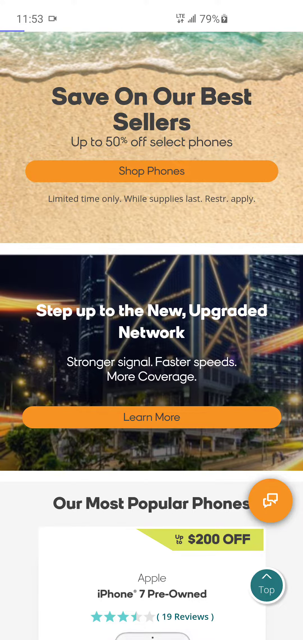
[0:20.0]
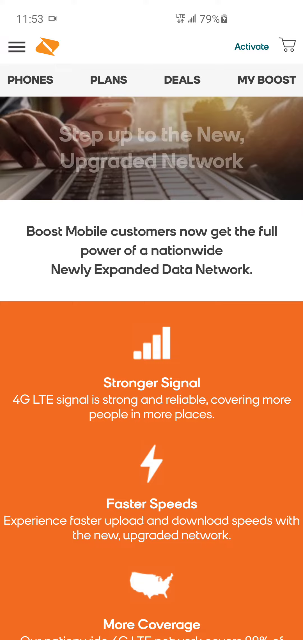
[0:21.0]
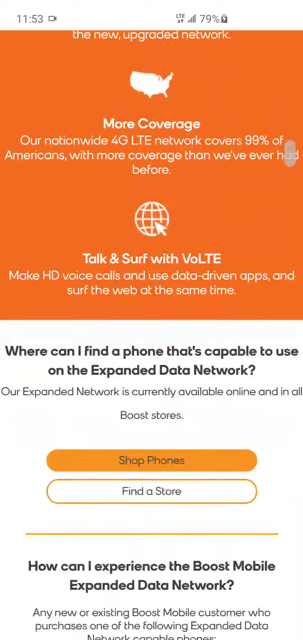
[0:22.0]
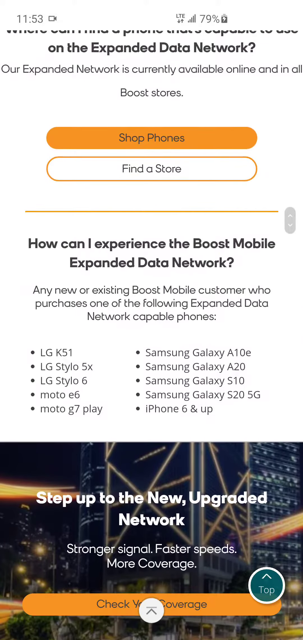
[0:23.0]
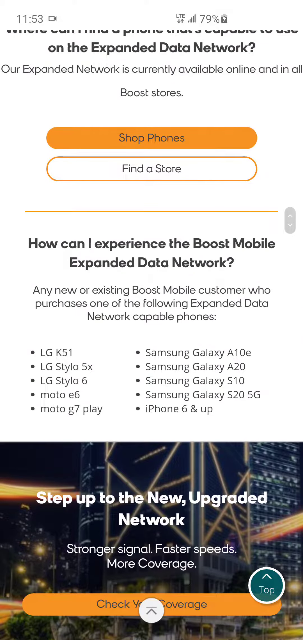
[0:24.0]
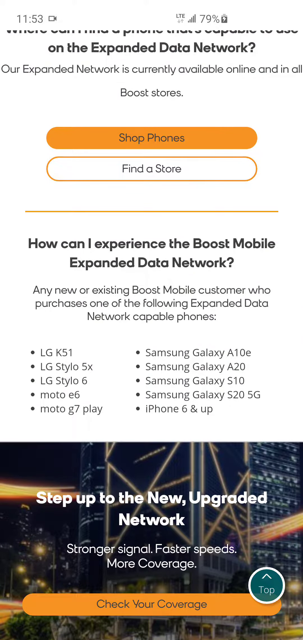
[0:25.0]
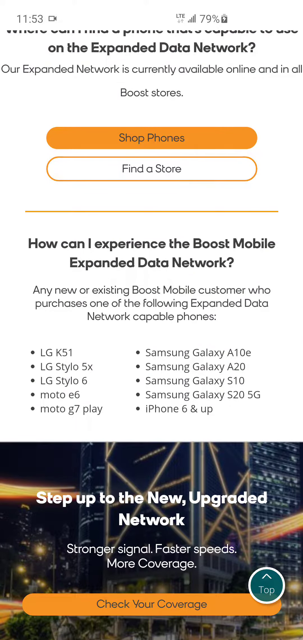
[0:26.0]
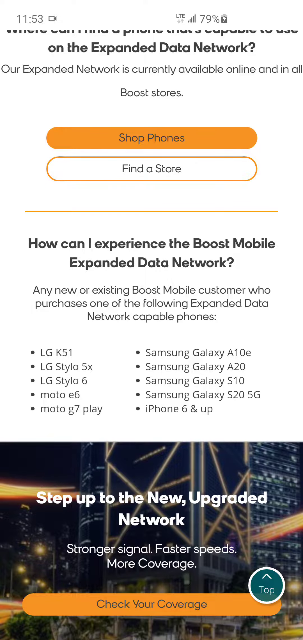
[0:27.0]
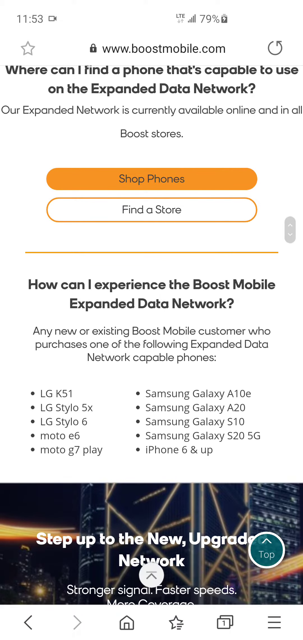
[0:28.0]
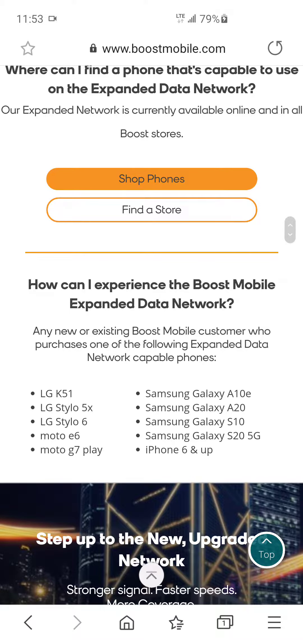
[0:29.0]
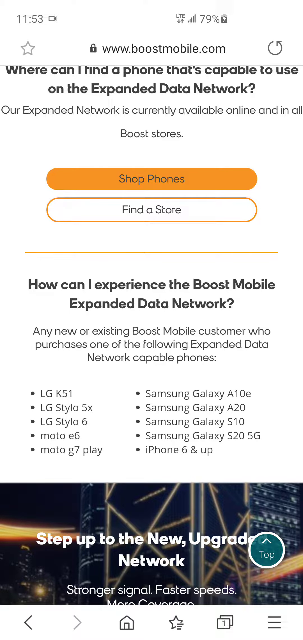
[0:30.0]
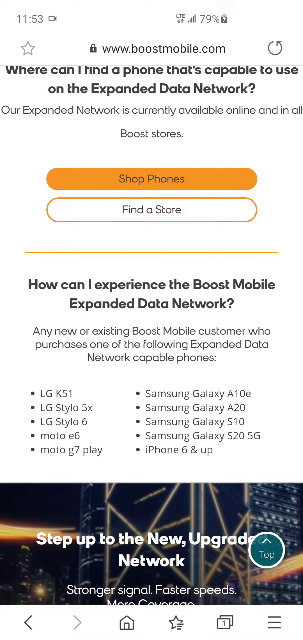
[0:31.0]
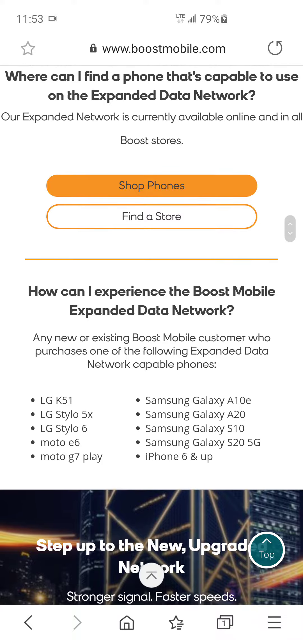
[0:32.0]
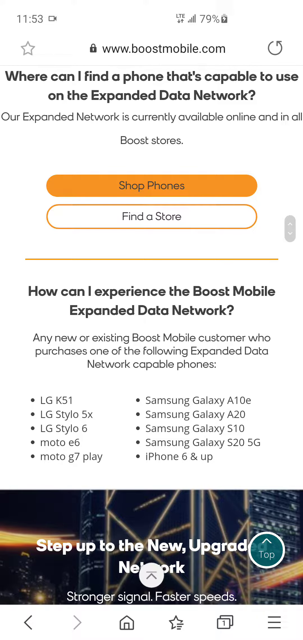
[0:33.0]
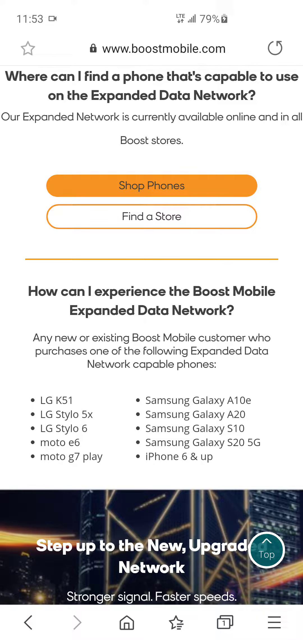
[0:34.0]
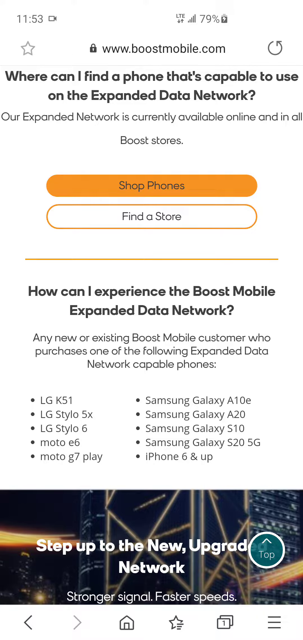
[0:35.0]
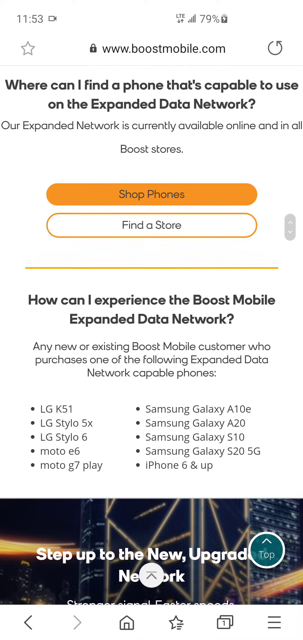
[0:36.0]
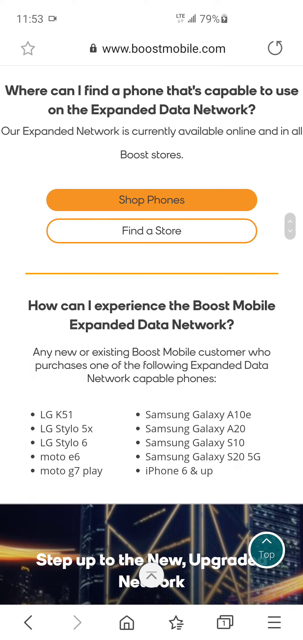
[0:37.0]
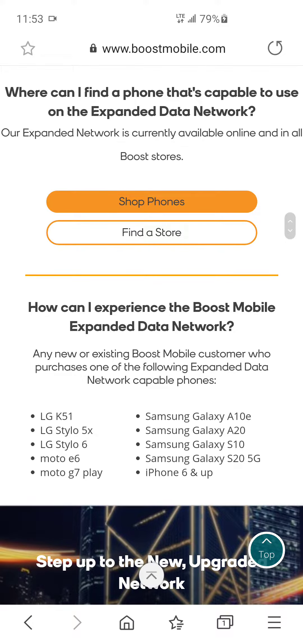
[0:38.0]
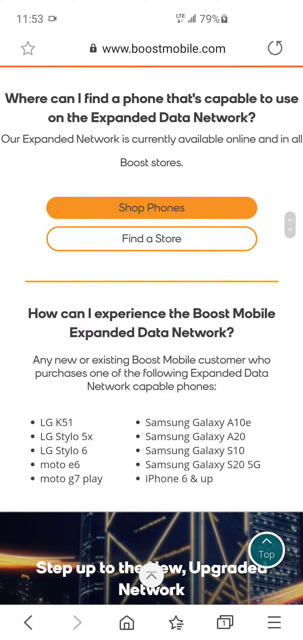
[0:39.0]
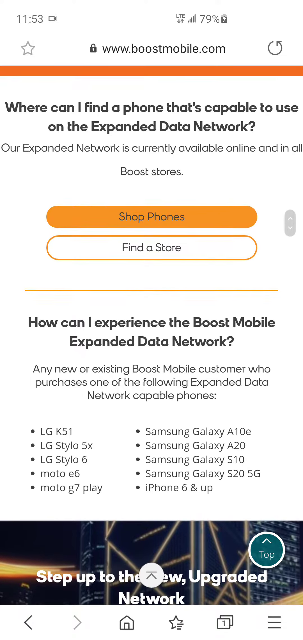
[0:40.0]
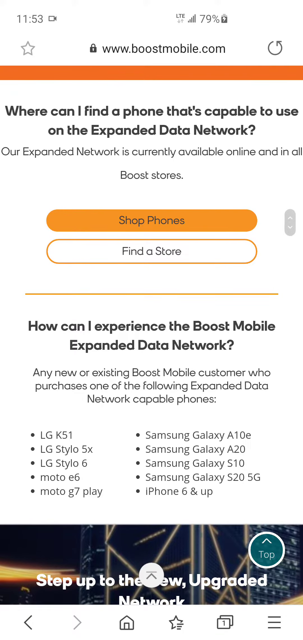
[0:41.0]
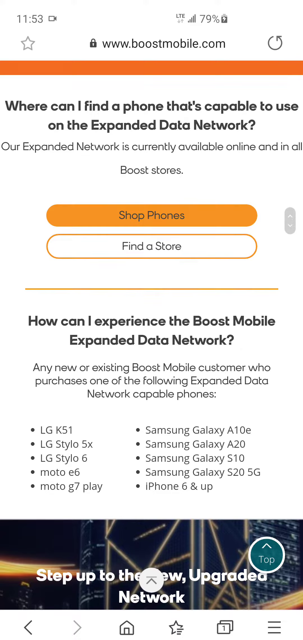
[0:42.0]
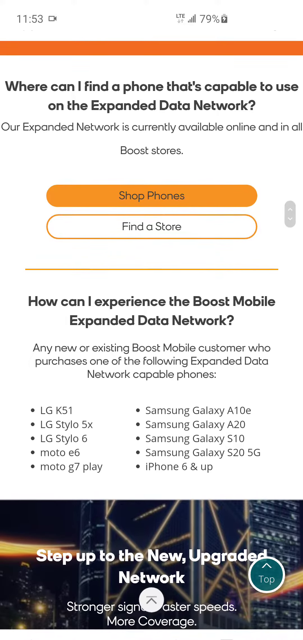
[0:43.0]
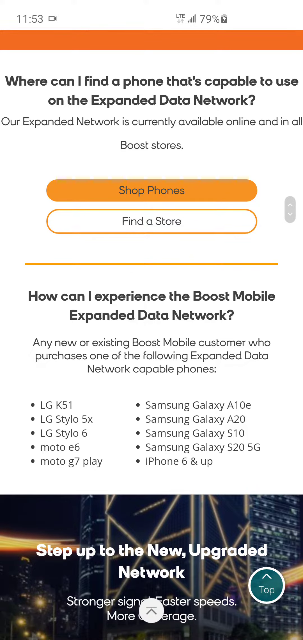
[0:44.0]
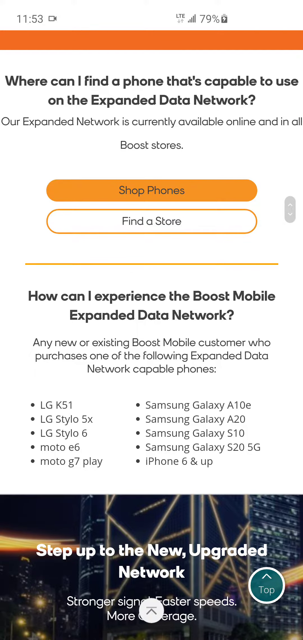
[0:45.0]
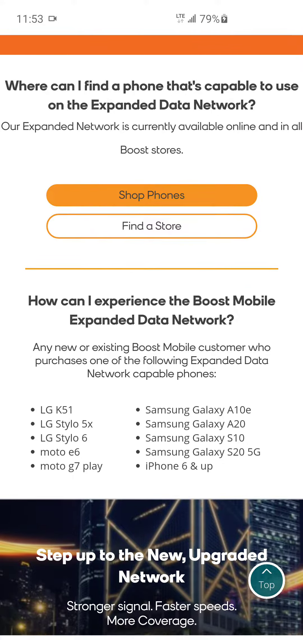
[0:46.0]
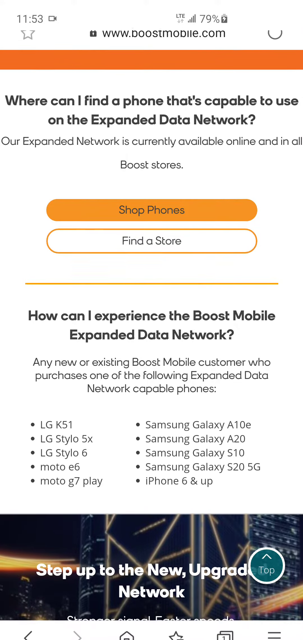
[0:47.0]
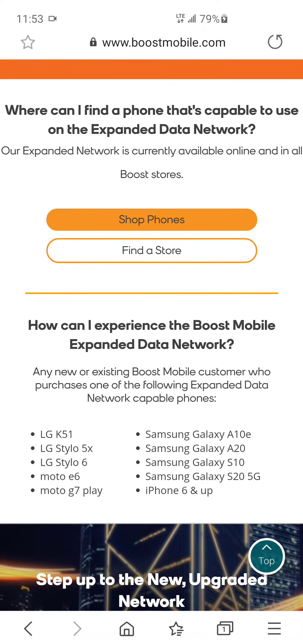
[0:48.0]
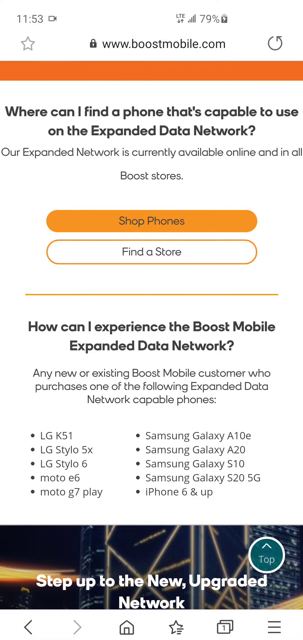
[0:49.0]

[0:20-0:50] The Boost Mobile app is open on the cell phone, showing its typical features. The person appears to be on a section with "shop phones" and "find a store". Text on the page reads "how can I experience the Boost Mobile Expanded Data Network? Any new or existing Boost Mobile customer who purchases one of the following expanded data networks, capable phones." The capable phones appear to be a few LG models, some Moto models, some Samsung models, and iPhone. An advertisement at the bottom reads "step up to the new upgraded network. Stronger signal, faster speeds, more coverage." Behind it is kind of a wallpaper that looks to be an animated cell phone tower and a kind of high-tech CGI-generated background. The person appears to scroll up and down, looking at the different features on the BoostMobile.com mobile website.